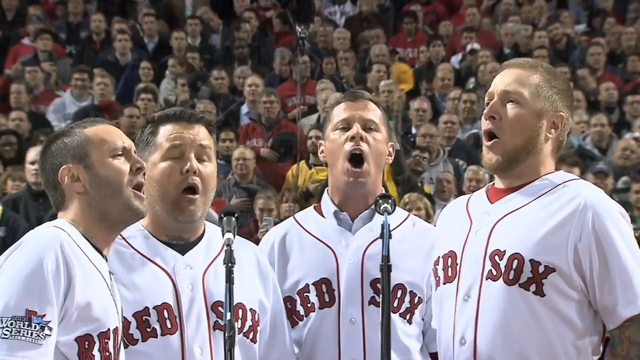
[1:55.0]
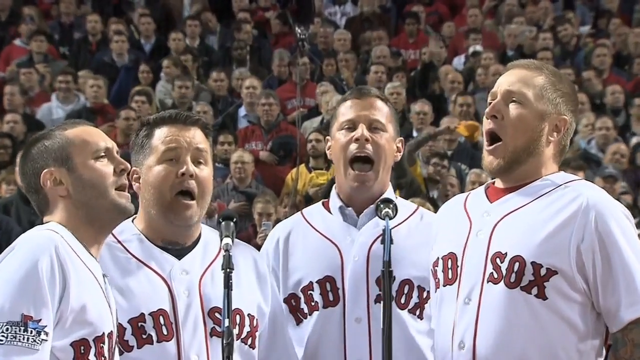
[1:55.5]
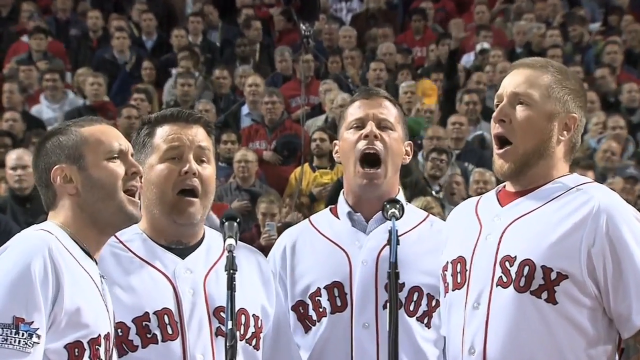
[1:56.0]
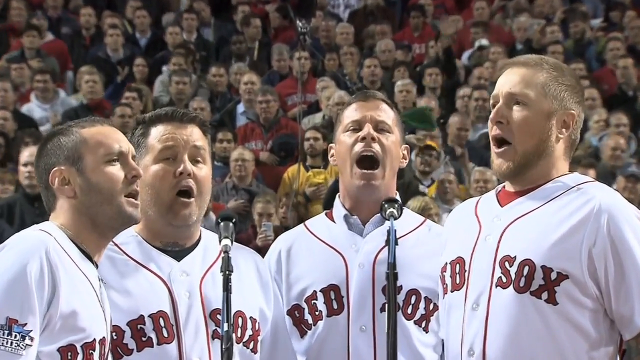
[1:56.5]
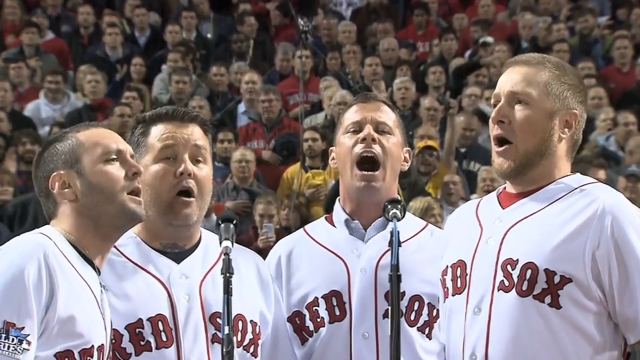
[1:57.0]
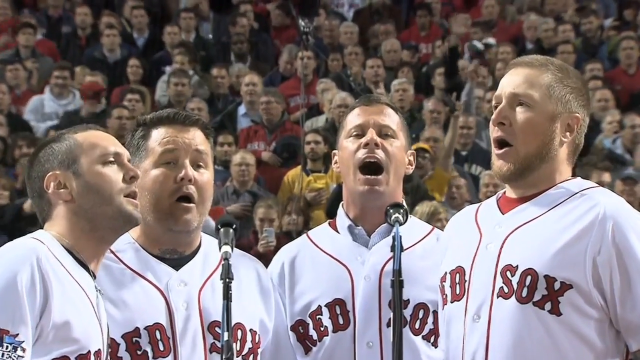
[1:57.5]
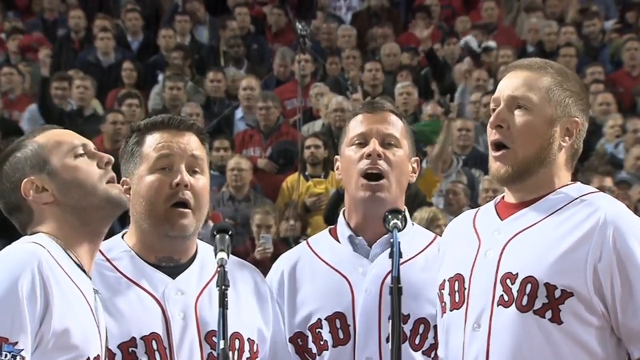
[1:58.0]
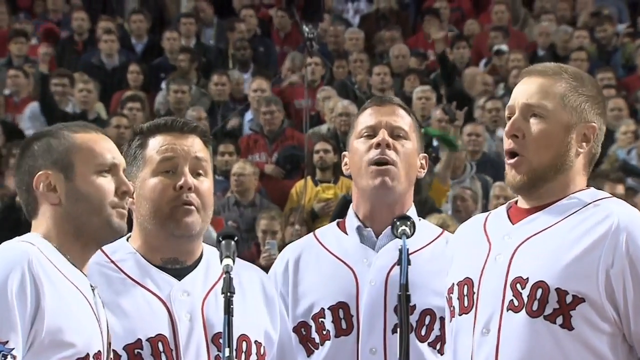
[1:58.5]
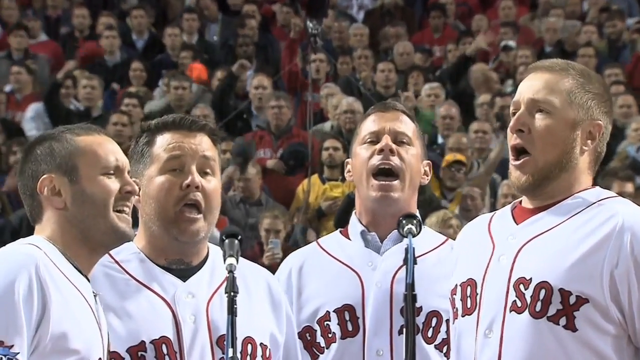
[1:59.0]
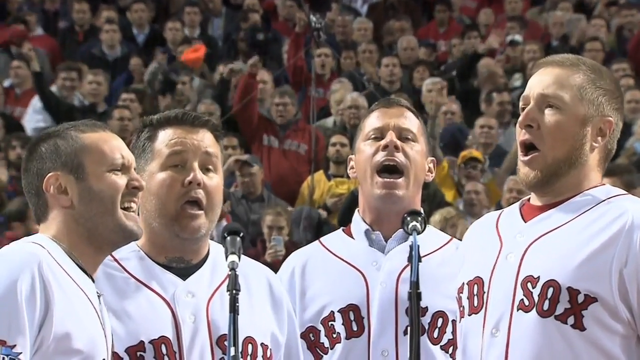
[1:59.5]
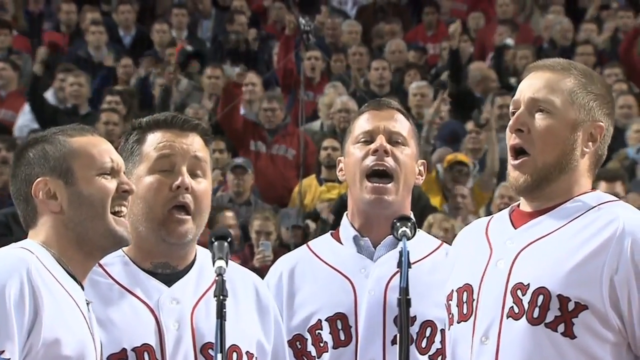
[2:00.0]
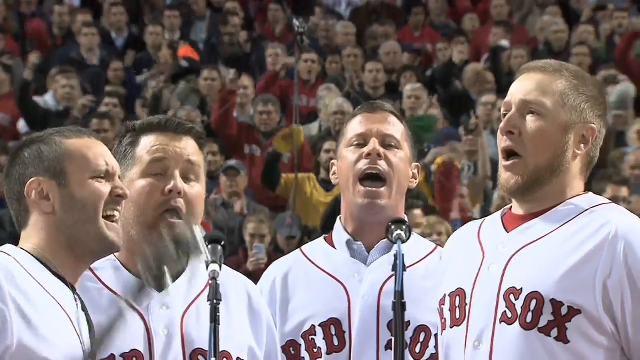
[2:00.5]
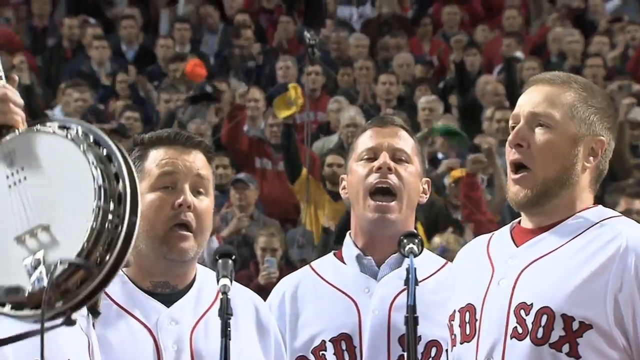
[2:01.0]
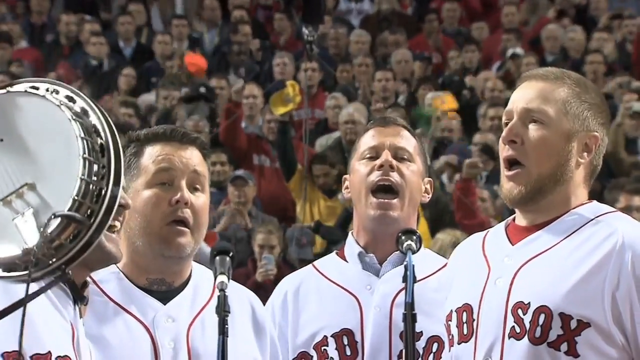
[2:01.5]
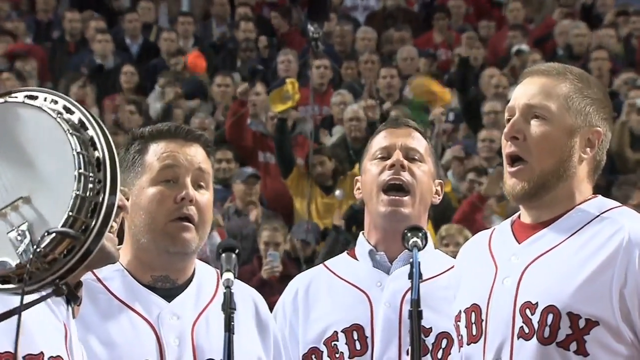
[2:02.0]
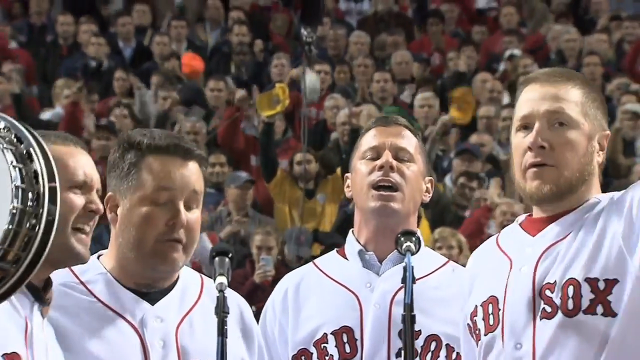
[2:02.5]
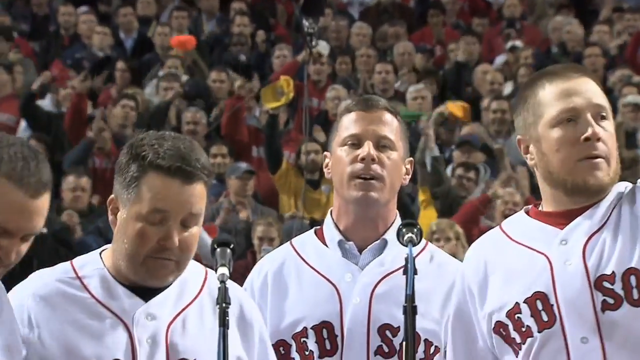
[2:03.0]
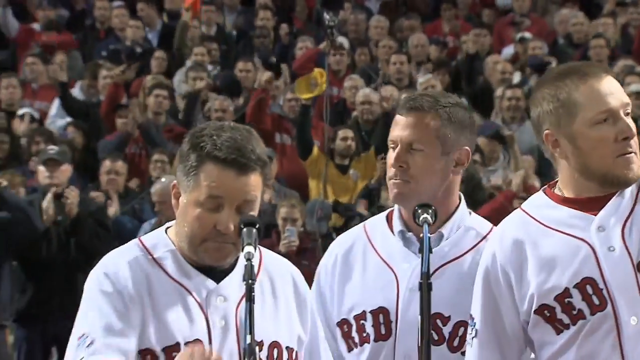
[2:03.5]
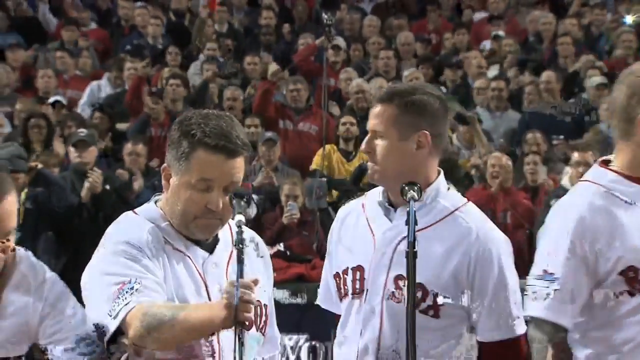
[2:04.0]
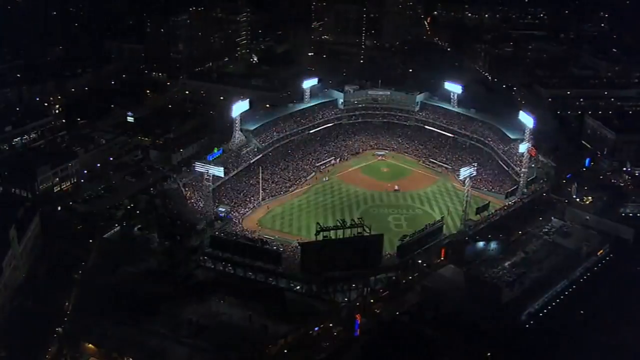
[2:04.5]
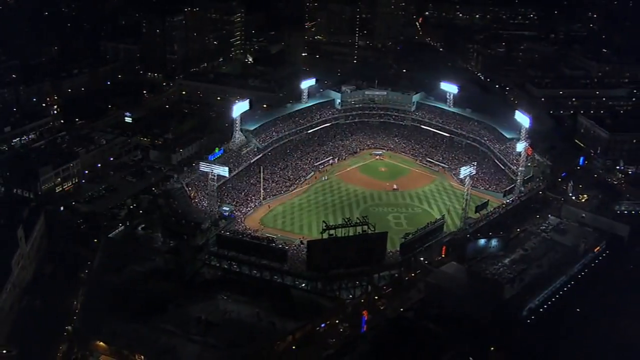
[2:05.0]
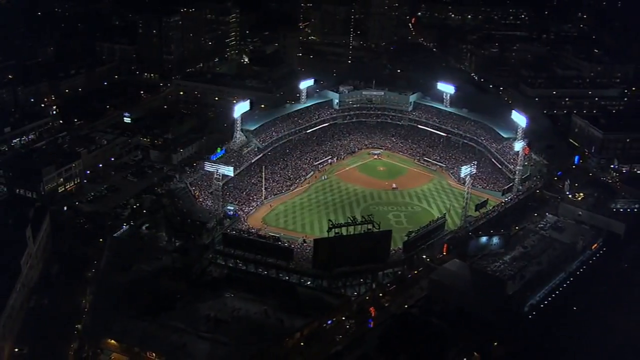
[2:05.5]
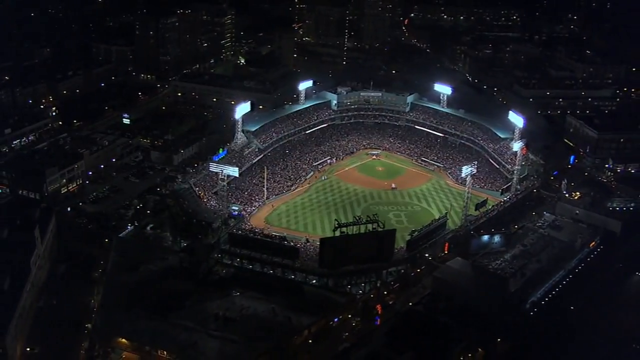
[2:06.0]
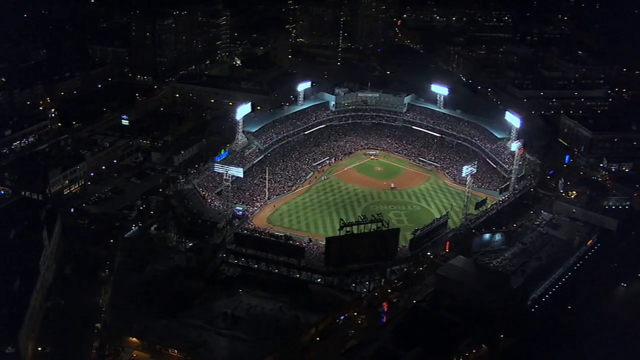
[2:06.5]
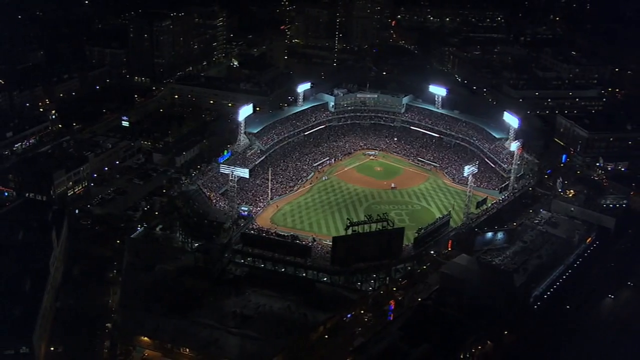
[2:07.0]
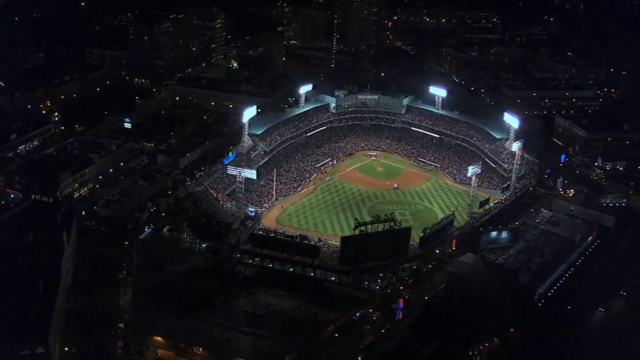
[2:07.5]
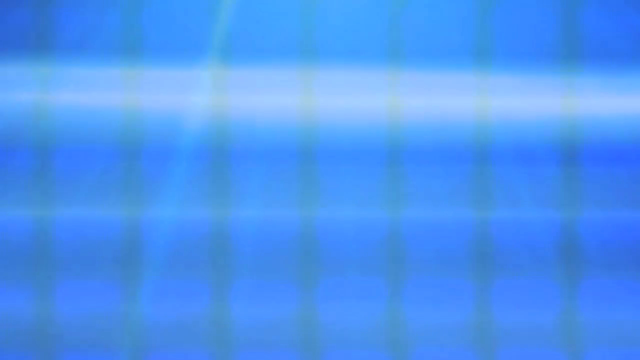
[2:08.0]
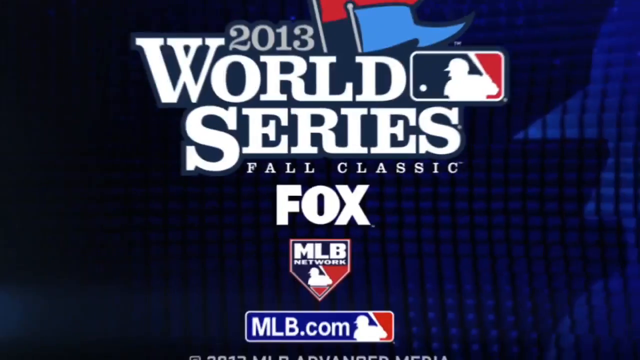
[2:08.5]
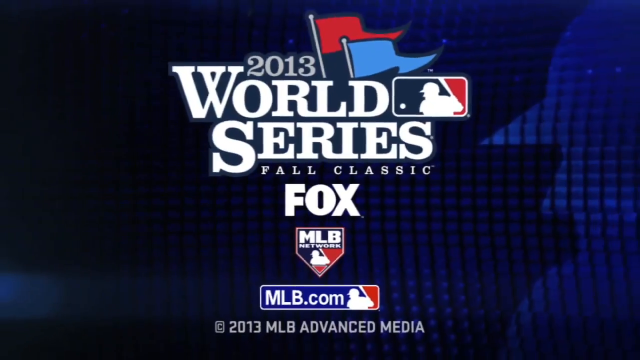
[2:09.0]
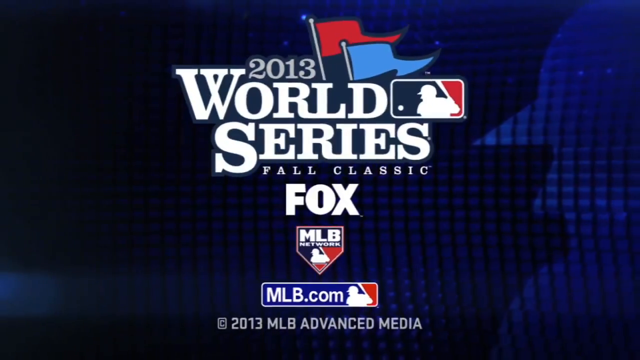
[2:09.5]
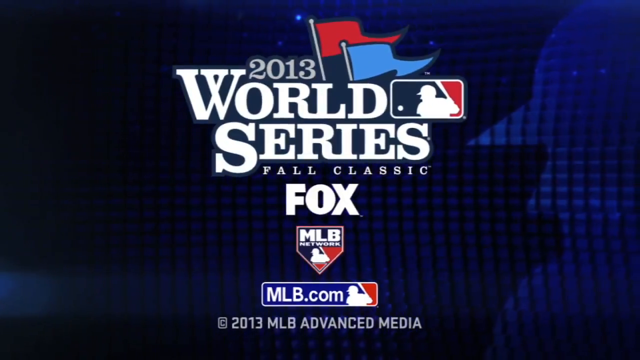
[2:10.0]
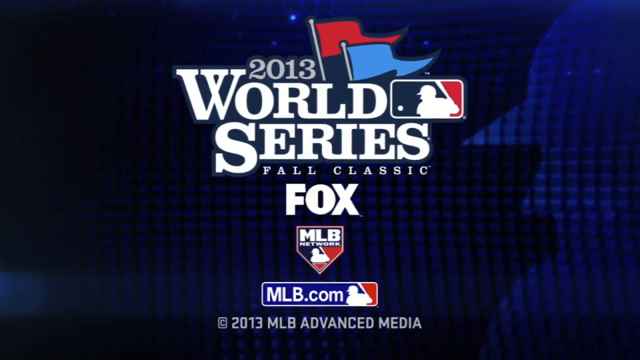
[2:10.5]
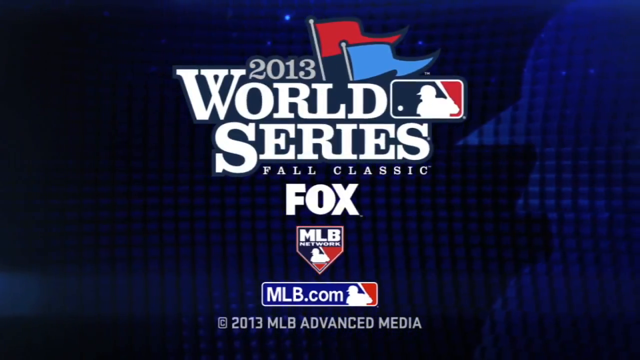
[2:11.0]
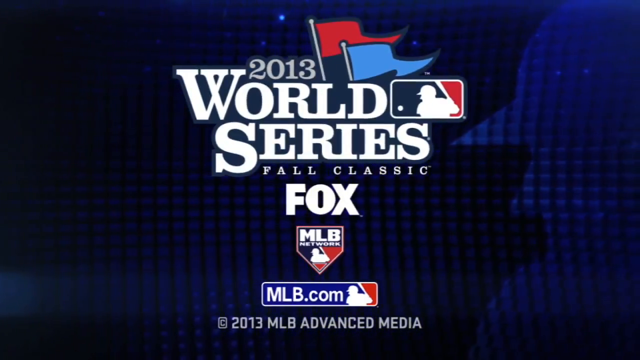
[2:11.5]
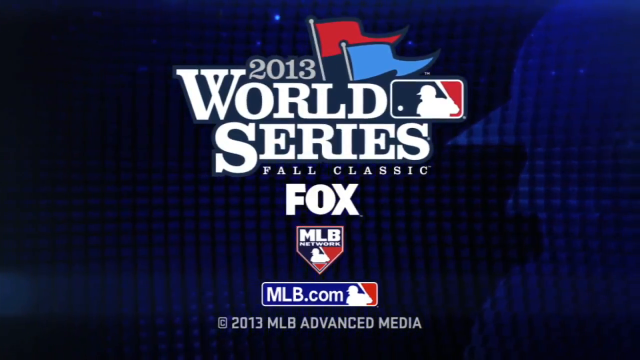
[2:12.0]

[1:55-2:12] A very zoomed-in shot of the men shows mostly the tops of their shoulders and their faces as they finish the national anthem, apparently mouthing "brave." They all look like they are singing at different pitches, probably harmonizing. After finishing, one of them holds up his banjo, and they raise their hands as if proud and step away from the microphone. The camera zooms all the way out to show the entire field, with the two shades of green checkered stripes on the outfield, the brown dirt, the whole stadium, and the city outside. The video then cuts to a television graphic that says "2013 World Series," and the men are no longer shown.